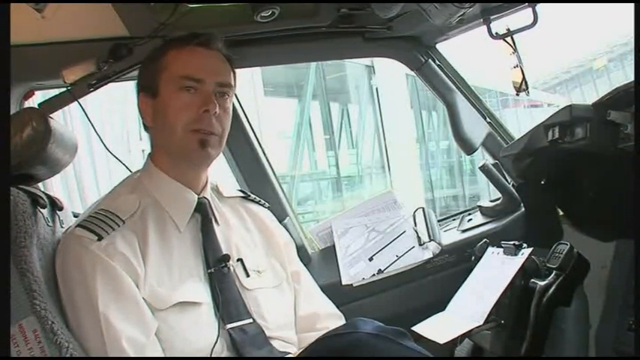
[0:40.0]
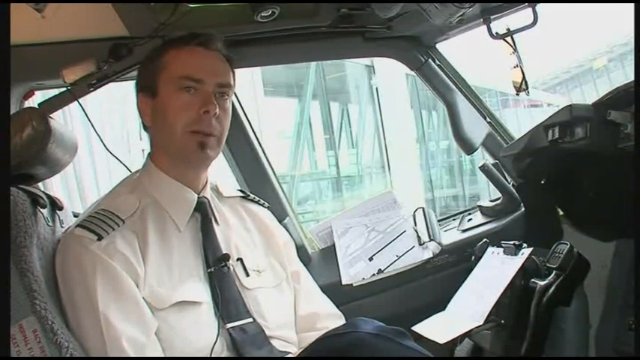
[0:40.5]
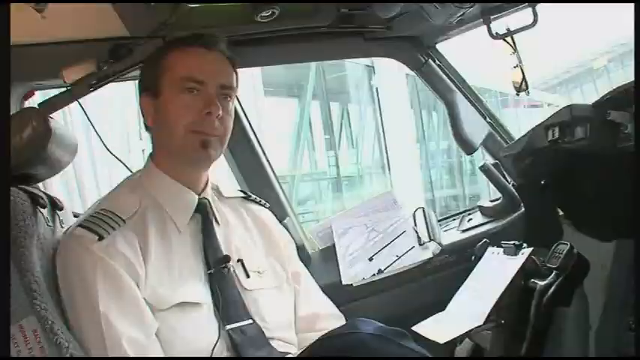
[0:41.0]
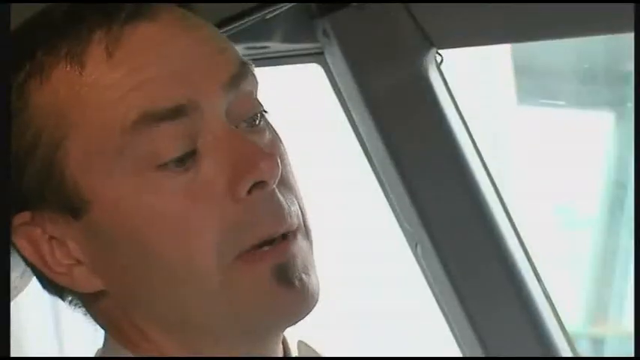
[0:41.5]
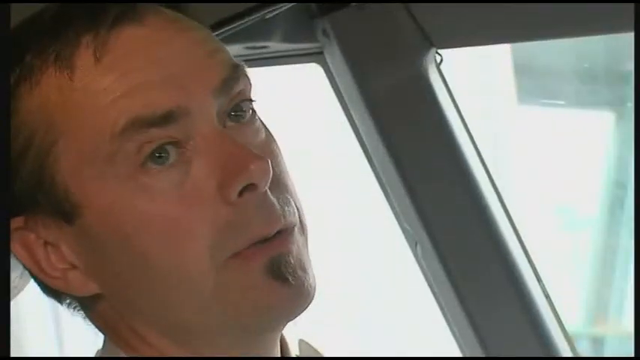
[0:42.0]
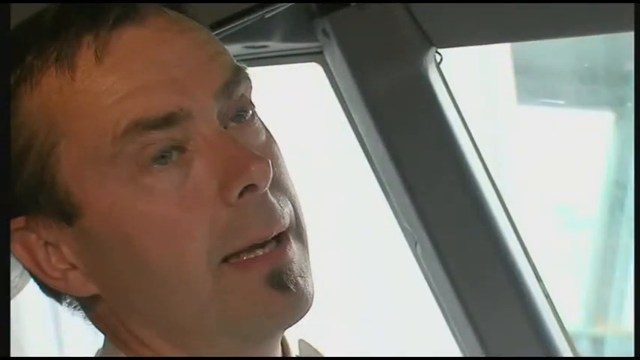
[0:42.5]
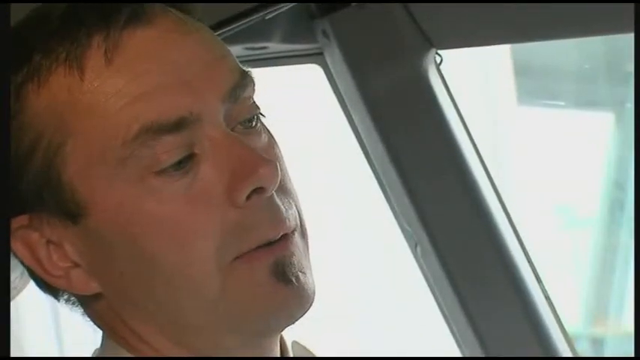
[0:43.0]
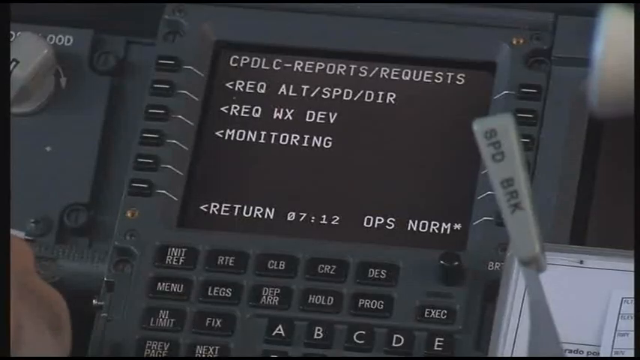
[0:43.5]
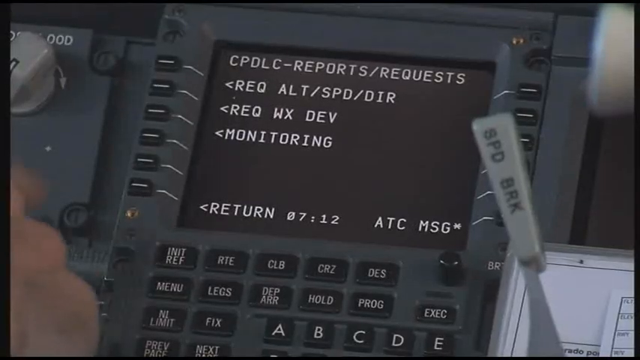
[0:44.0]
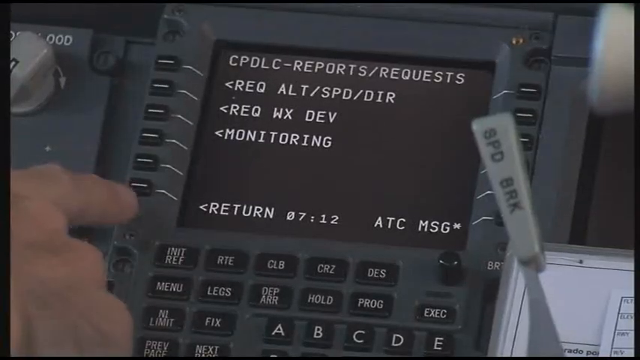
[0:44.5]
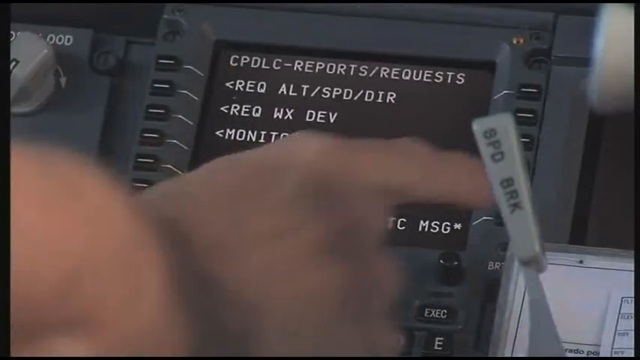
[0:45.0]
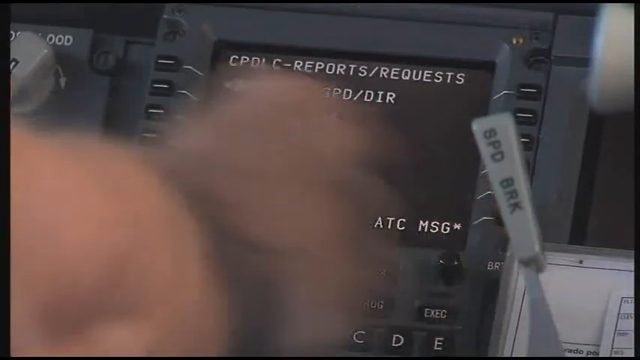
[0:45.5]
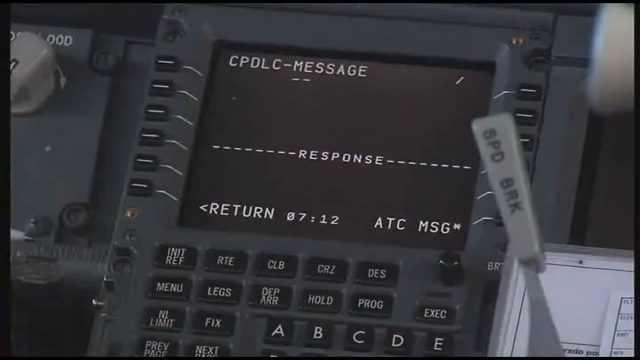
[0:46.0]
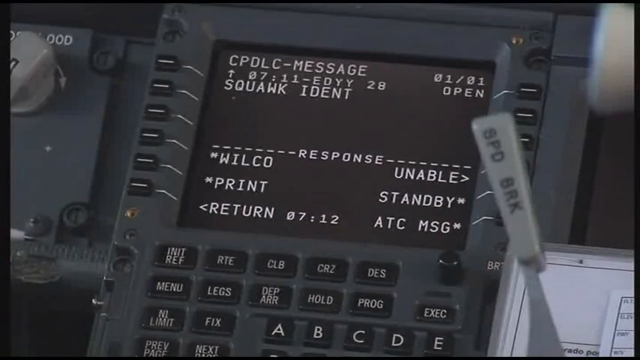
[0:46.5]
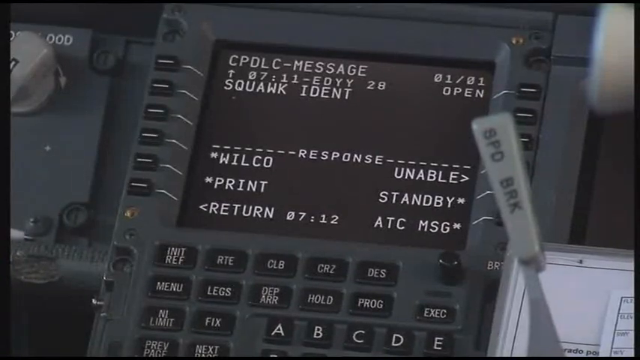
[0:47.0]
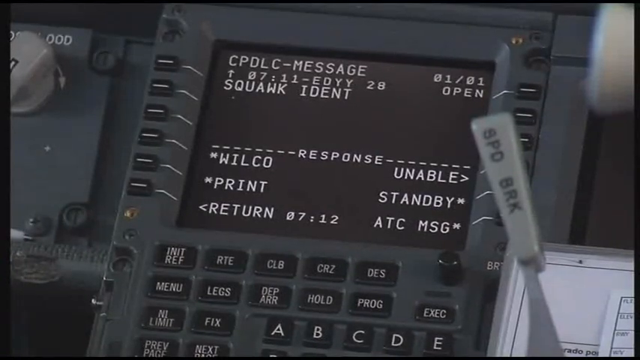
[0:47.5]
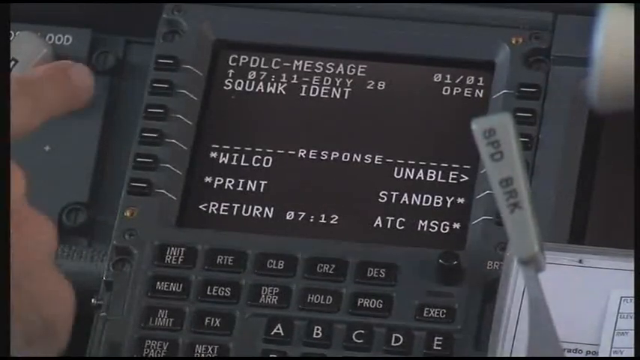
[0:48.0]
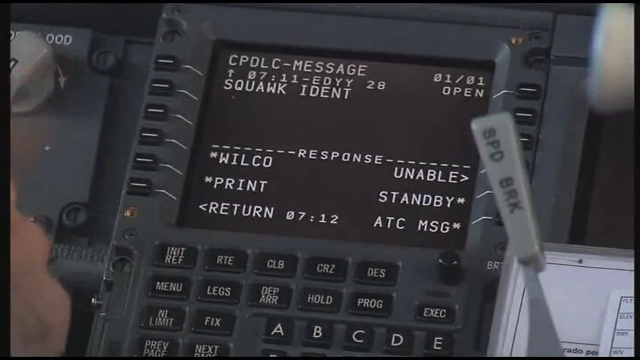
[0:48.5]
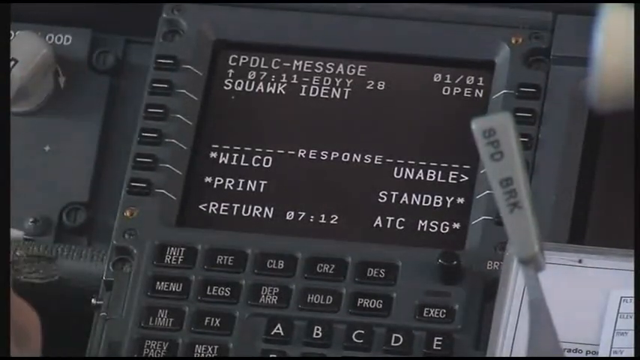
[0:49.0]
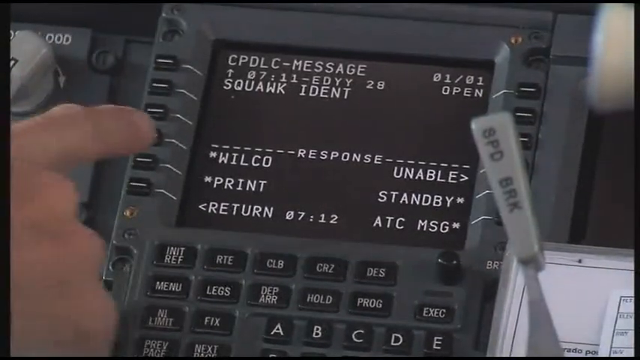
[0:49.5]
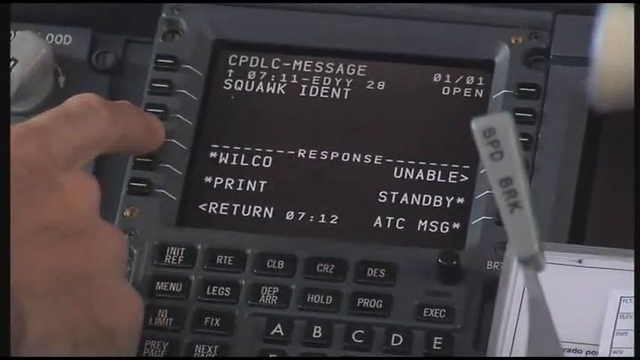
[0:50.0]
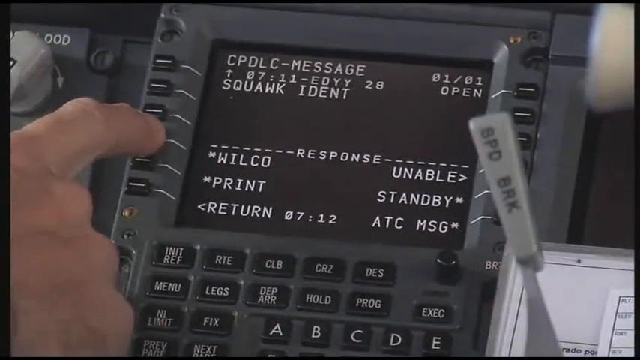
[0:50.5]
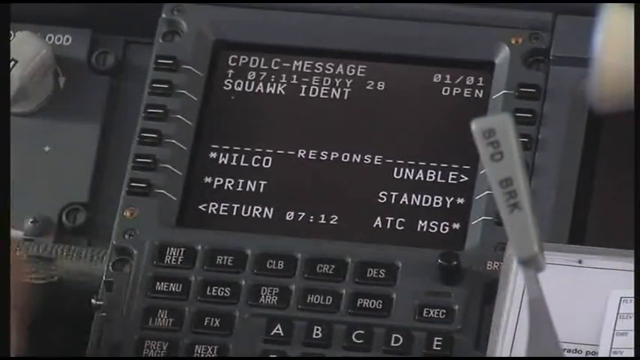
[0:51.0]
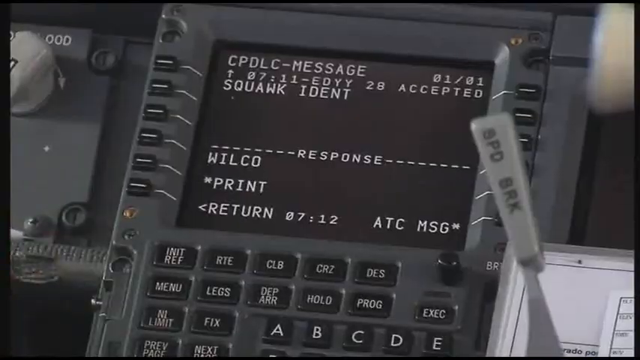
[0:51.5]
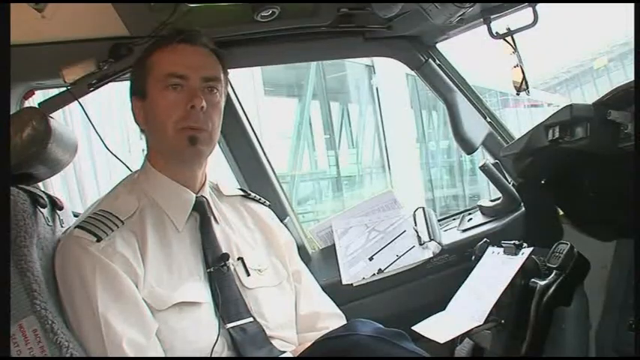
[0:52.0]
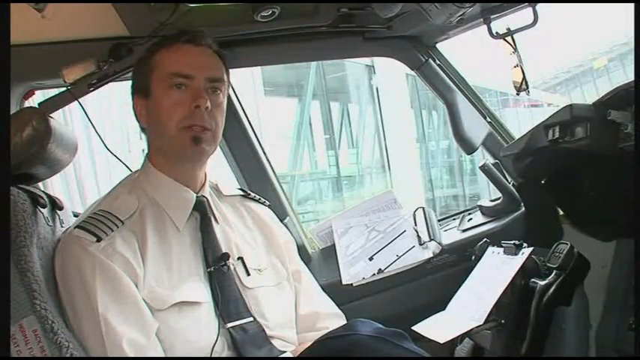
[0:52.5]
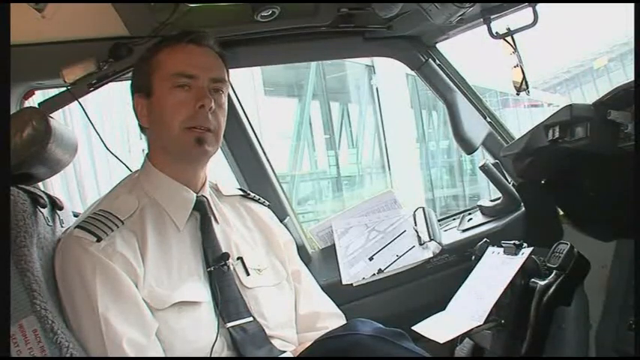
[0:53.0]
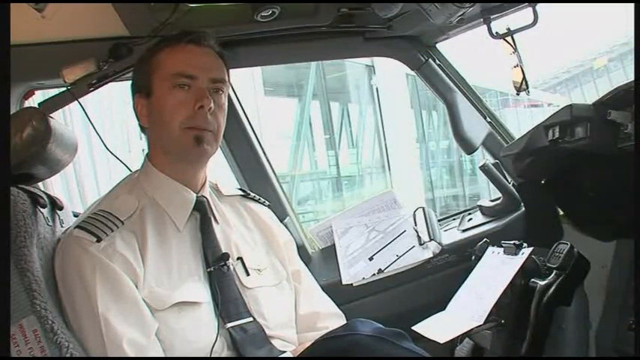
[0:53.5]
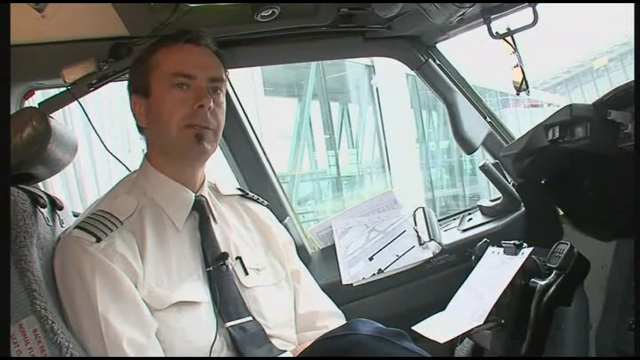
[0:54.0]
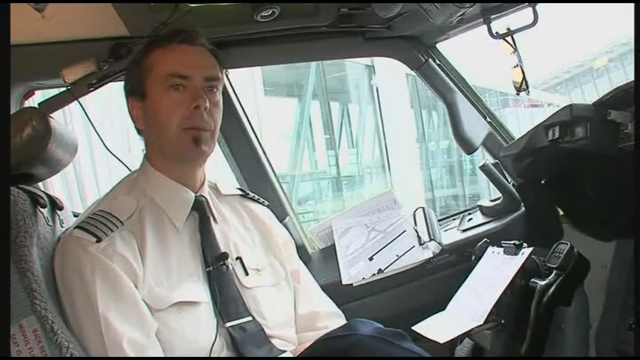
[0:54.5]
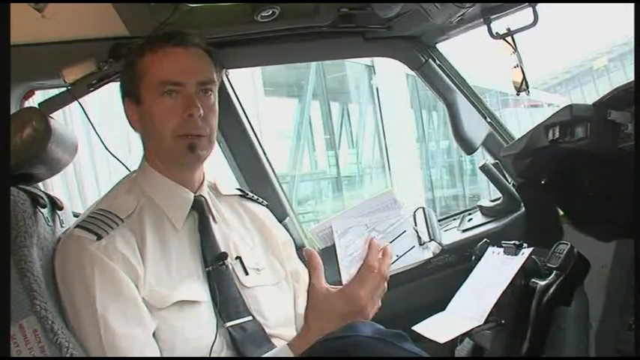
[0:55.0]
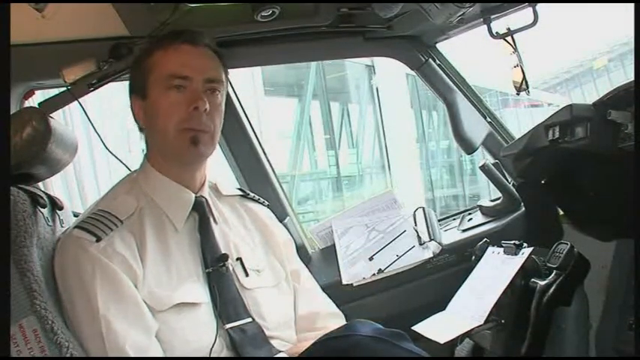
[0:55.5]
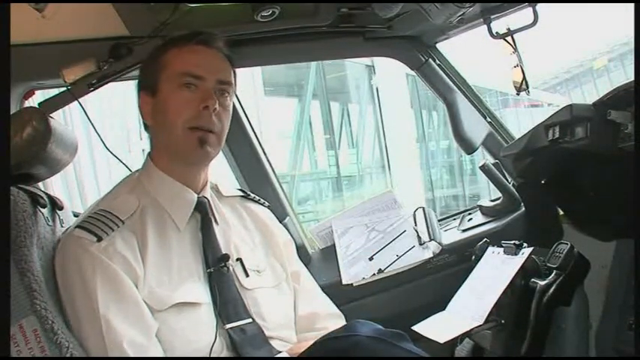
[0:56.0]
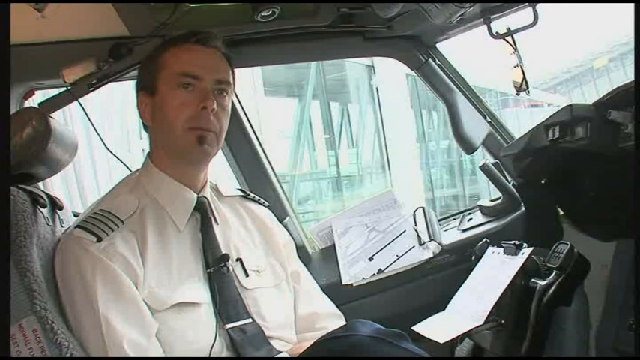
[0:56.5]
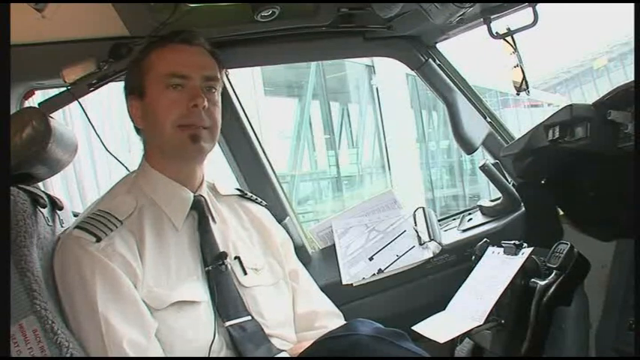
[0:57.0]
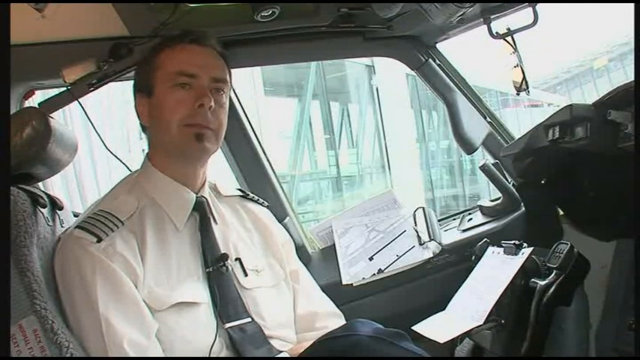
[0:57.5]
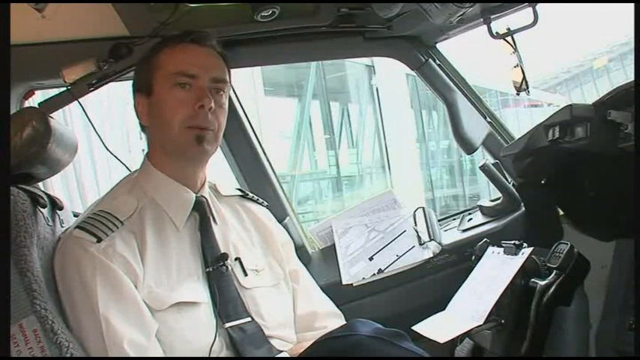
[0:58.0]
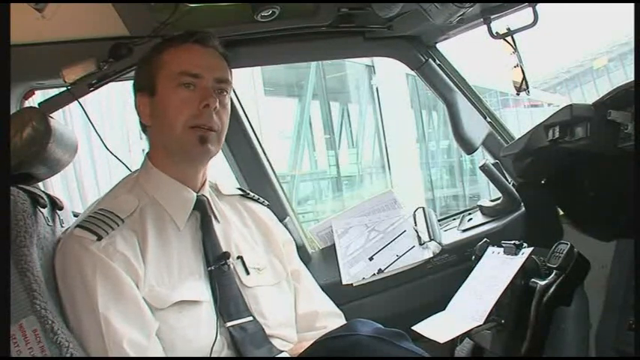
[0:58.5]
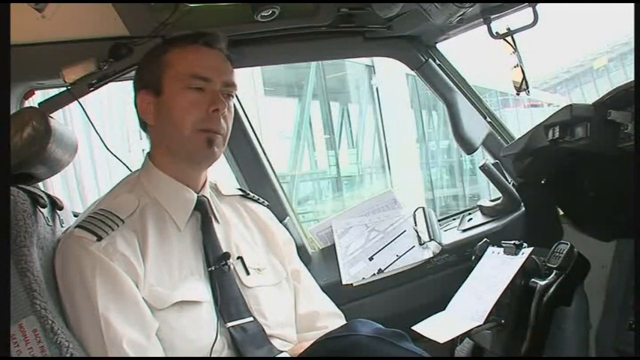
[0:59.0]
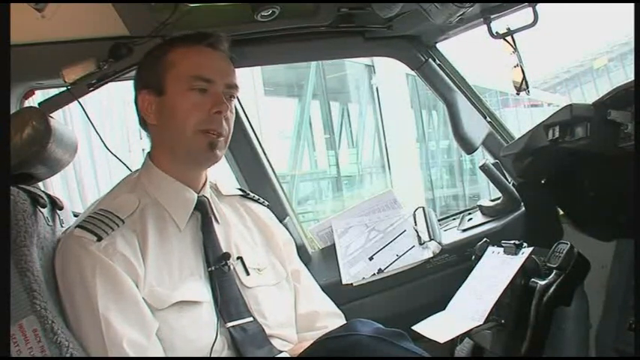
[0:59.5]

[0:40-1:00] The camera zooms in and out of his face from different angles, showing his headshot, and then cuts to a screen on the dashboard. It is a digital screen with text on it that says "monitoring" as well as "reports requests". Below the digital screen are many buttons: one says "RTE", and others say "CLB", "CRZ" and "DES". On the left and right sides of the digital screen there are also buttons, ten in total, five on each side, with no names, just a dashed line. He presses one of the buttons on the bottom right side, and the digital screen changes to "CPDLC message", showing "response", "Wilco", "print", "return", "able", "standby" and "ATC messaging". He presses another button on the left side, apparently the fourth one, and then the camera pans back to him speaking in the driver's seat, very slowly and calmly, with slow blinks.